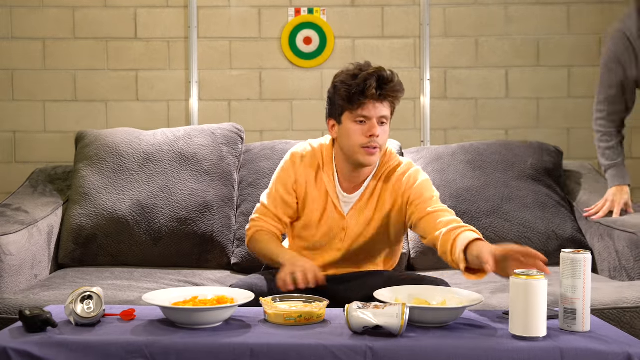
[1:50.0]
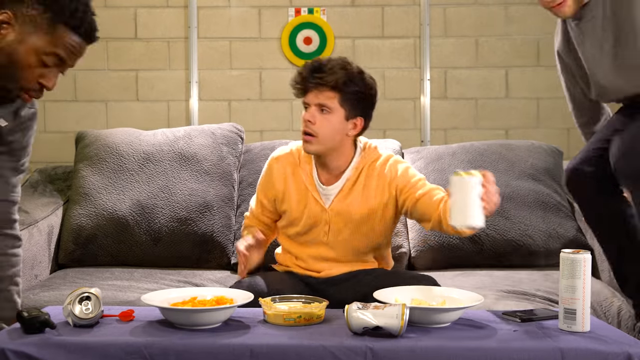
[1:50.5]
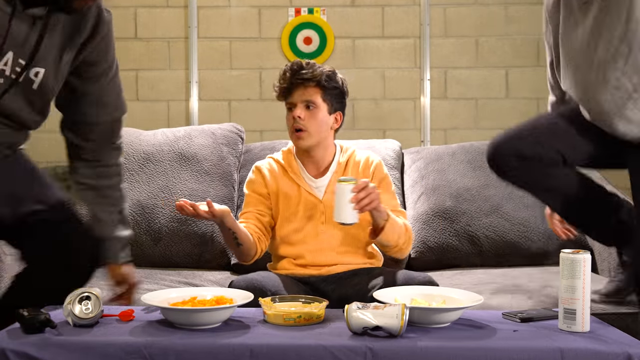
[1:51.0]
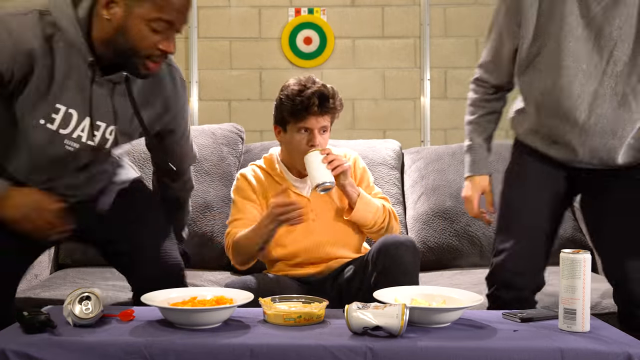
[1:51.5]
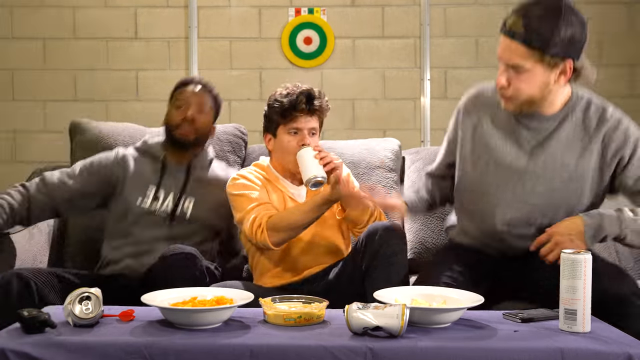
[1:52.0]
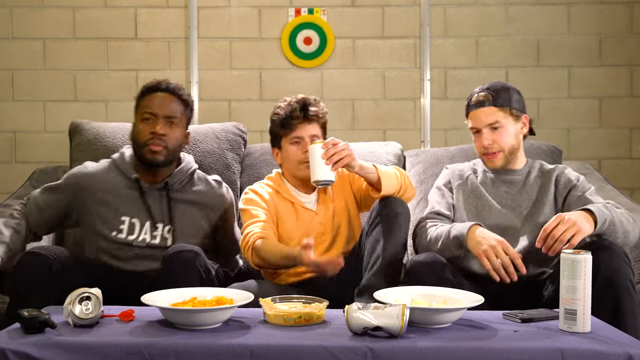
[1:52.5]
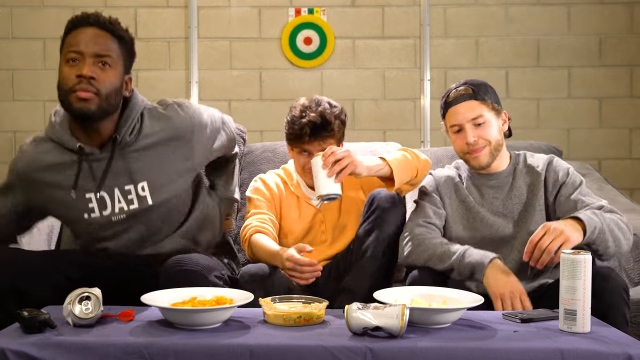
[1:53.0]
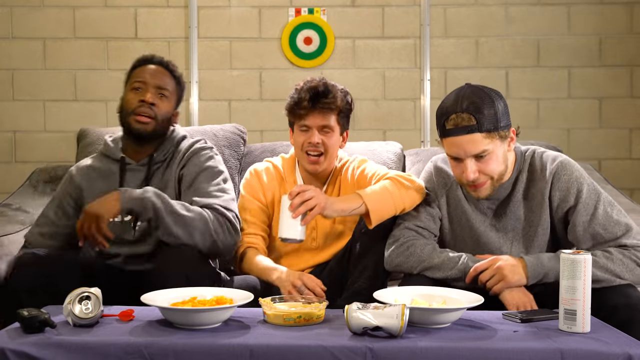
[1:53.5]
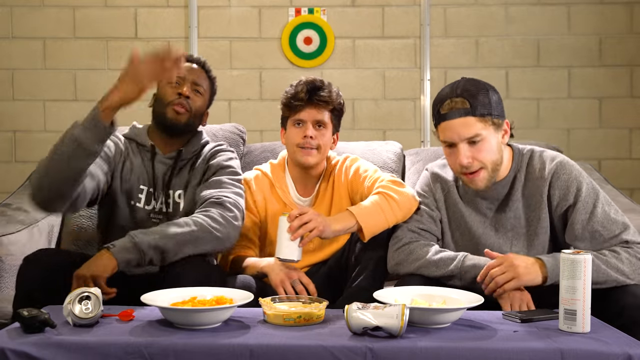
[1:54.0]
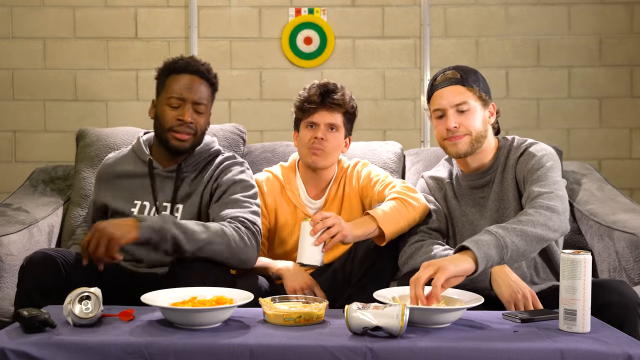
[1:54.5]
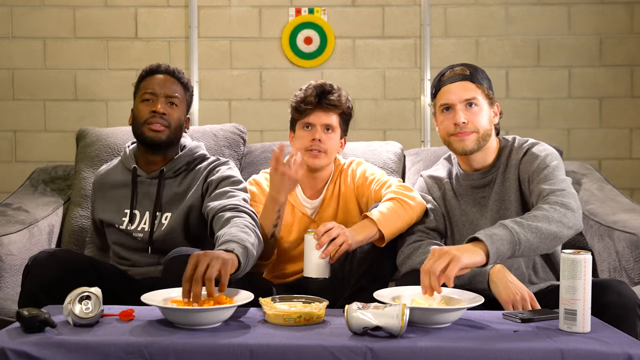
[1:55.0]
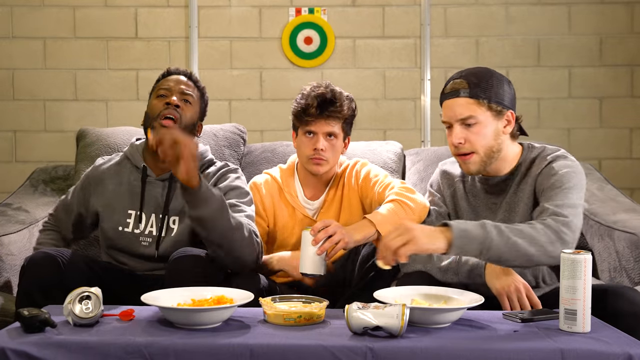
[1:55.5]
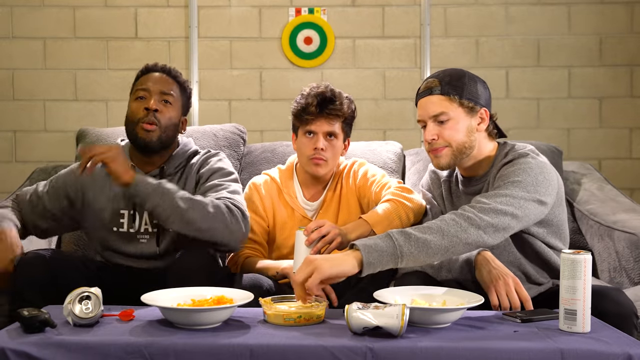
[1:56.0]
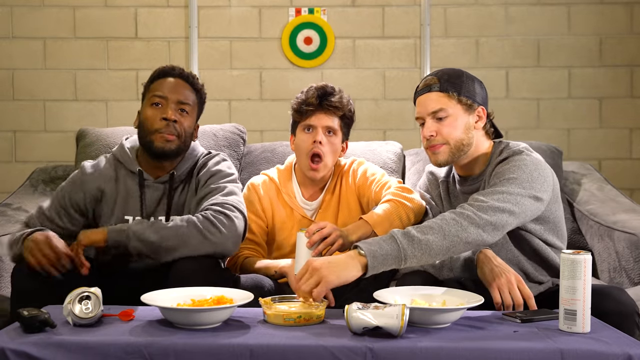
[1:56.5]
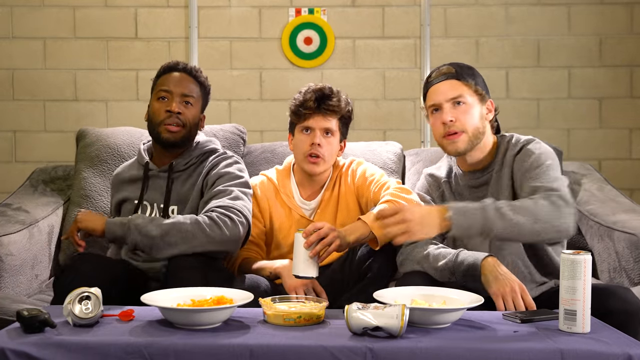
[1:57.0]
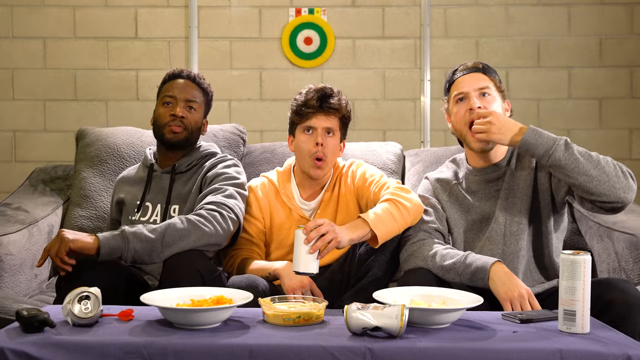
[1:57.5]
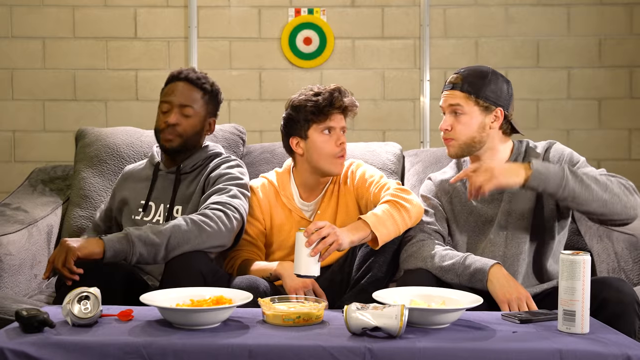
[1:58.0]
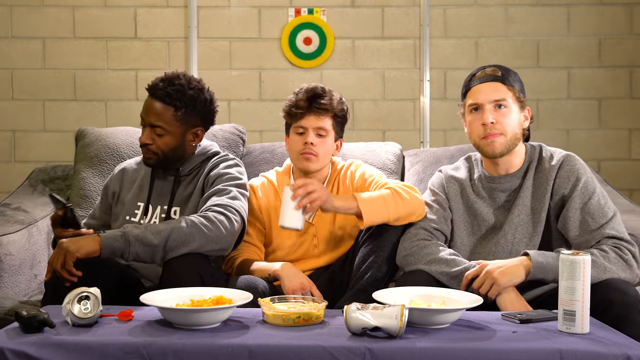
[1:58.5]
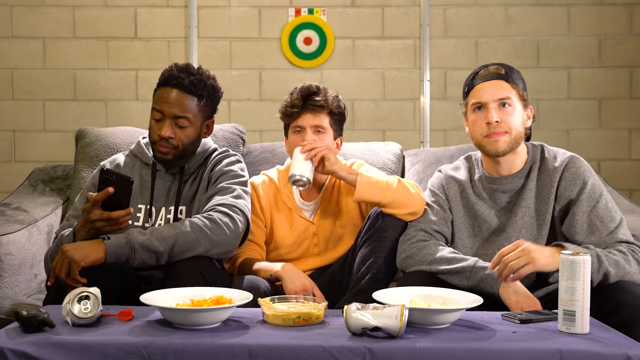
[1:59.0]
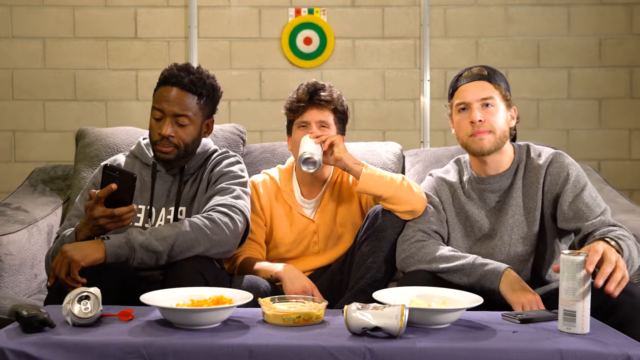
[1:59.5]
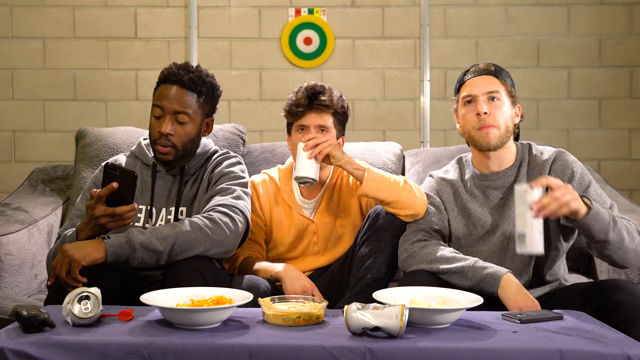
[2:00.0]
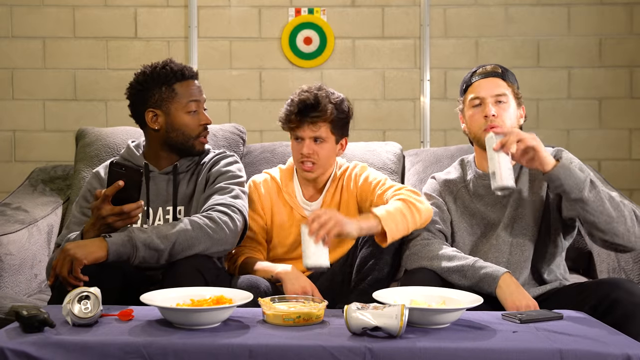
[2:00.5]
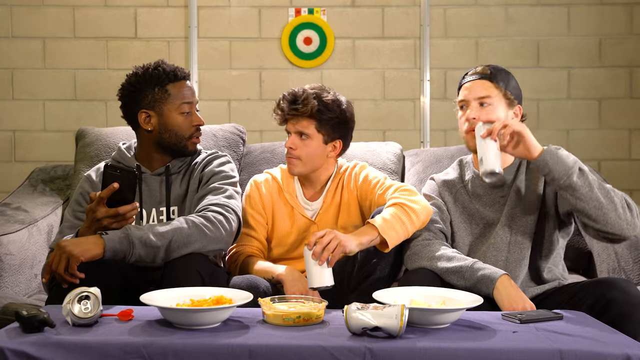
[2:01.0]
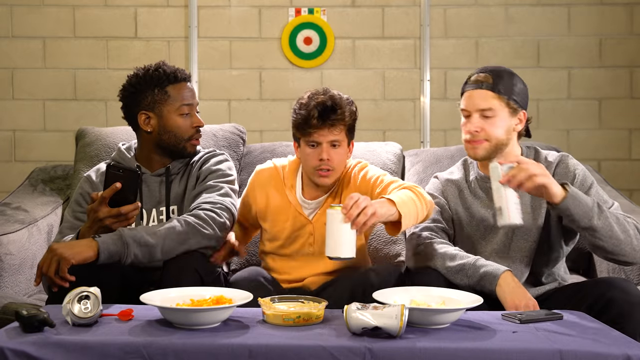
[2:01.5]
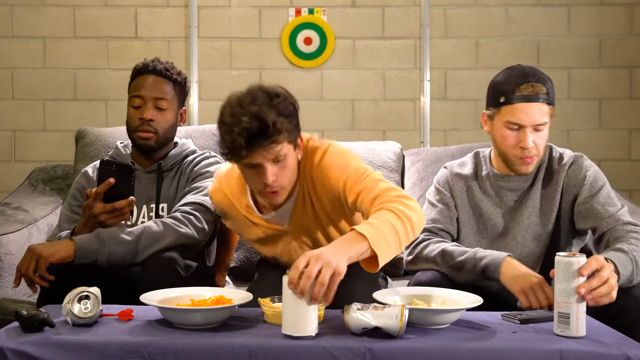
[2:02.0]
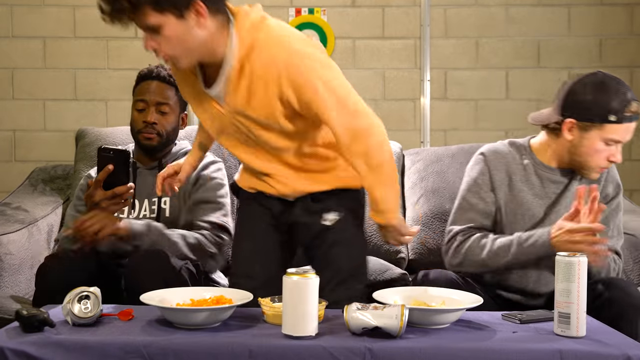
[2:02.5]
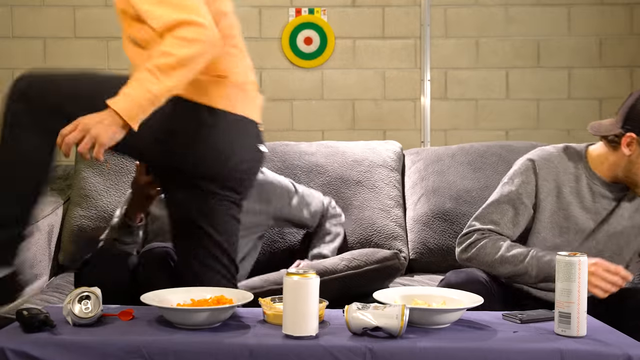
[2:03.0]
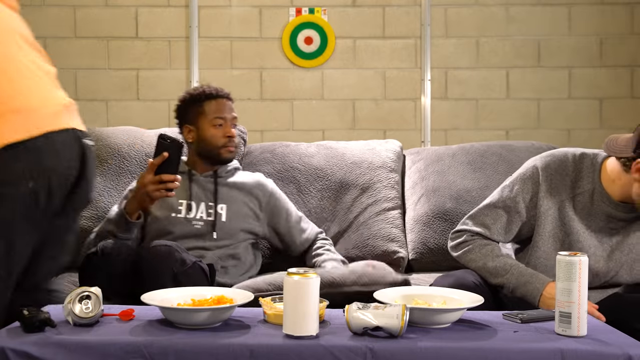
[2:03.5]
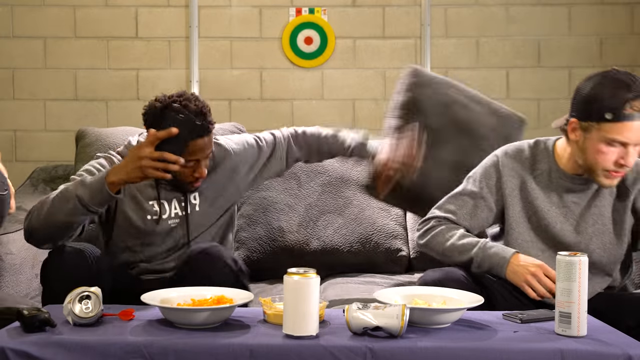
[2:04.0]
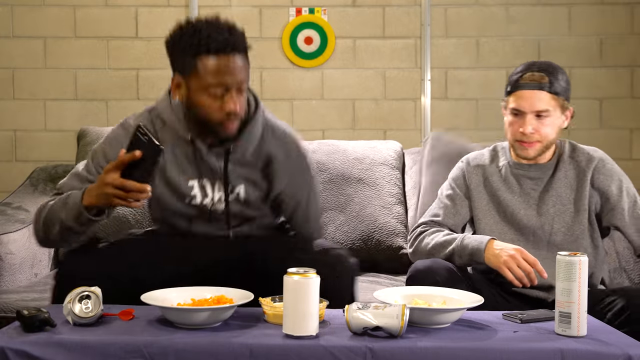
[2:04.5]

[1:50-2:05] After the TV is back on, the man in the middle picks up his drink in his left hand, which looks like a can with a white label. The two men sit down on either side of him and slap hands in a low high five. They watch TV, still talking, eating and drinking. The man on the left then appears to get a phone call and takes his phone out of his back pocket. He looks at the man in the middle, who gets up and walks out of frame. The man on the left with the phone moves over toward the man on the right and sits in the middle of the couch. The man on the right leans over and picks up what looks like the air horn.